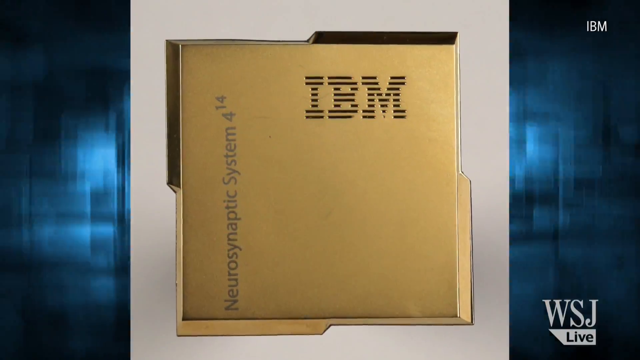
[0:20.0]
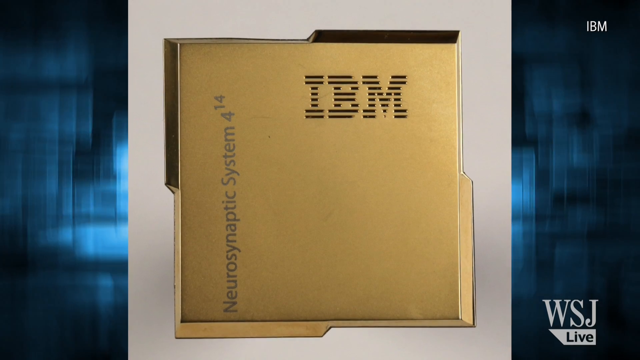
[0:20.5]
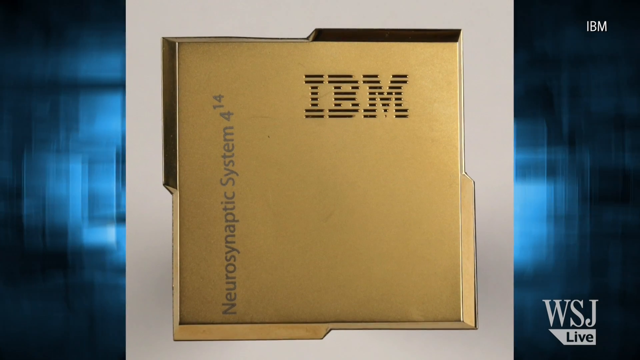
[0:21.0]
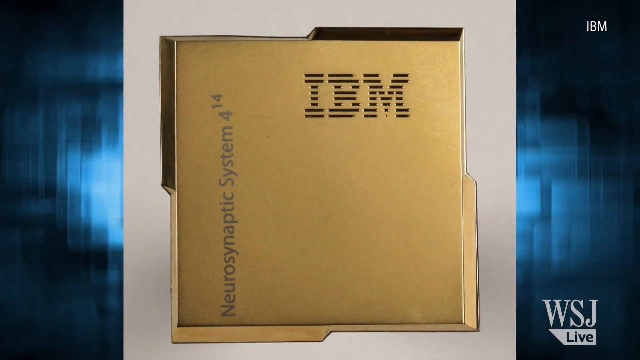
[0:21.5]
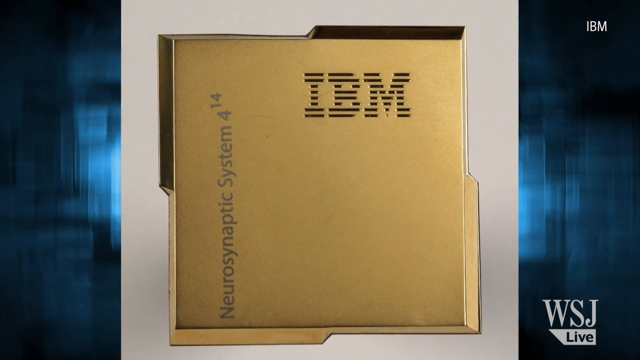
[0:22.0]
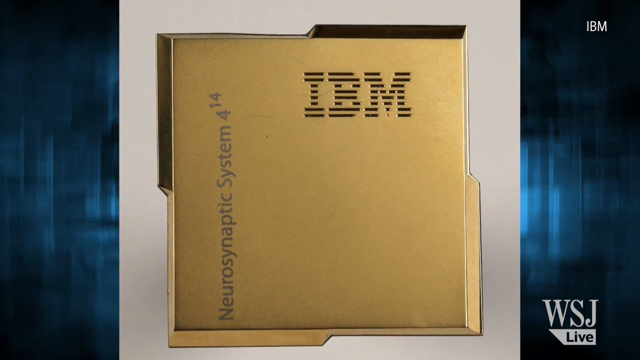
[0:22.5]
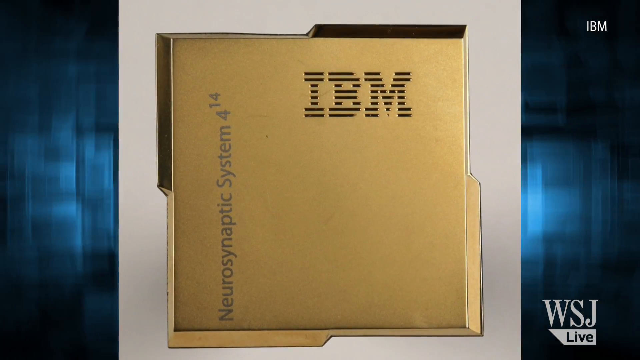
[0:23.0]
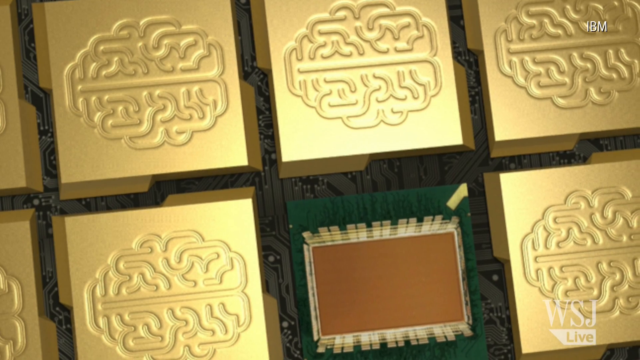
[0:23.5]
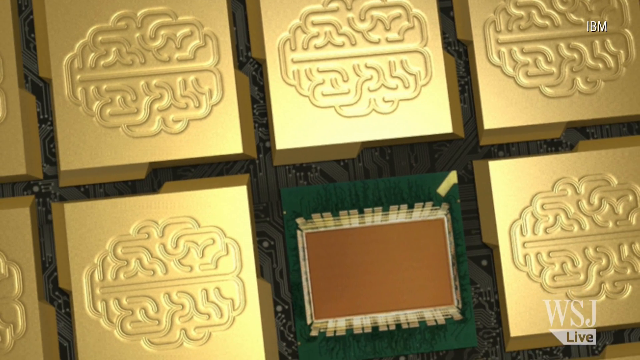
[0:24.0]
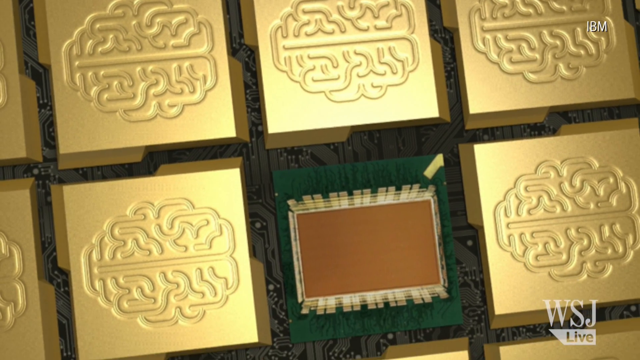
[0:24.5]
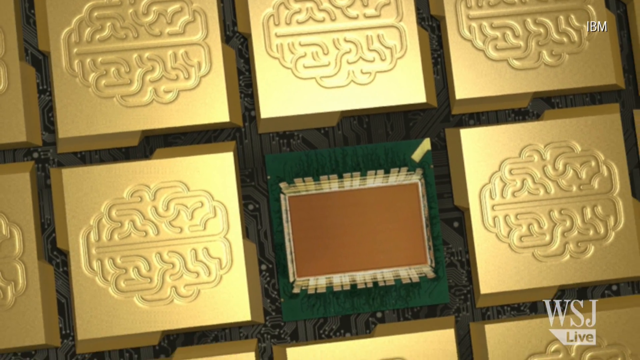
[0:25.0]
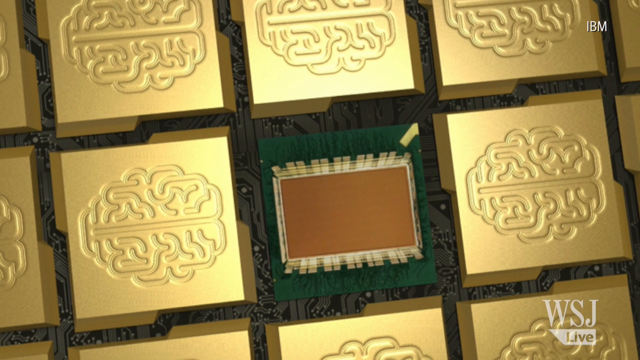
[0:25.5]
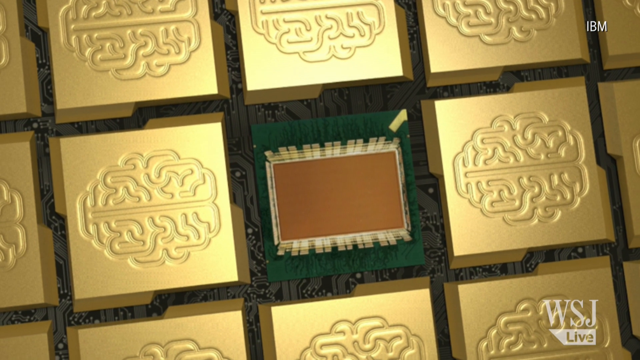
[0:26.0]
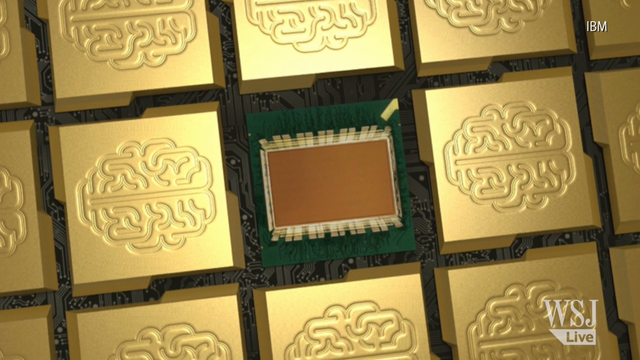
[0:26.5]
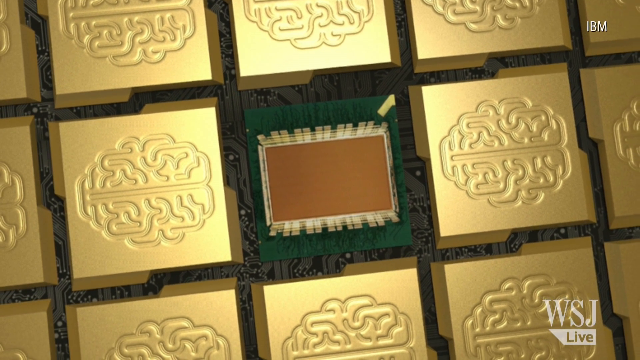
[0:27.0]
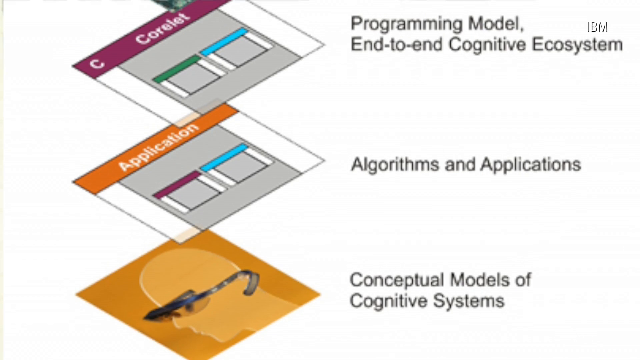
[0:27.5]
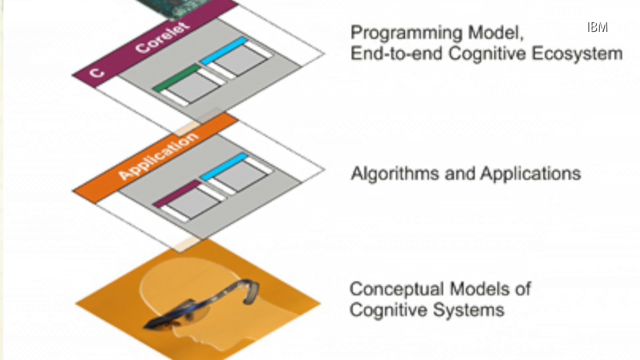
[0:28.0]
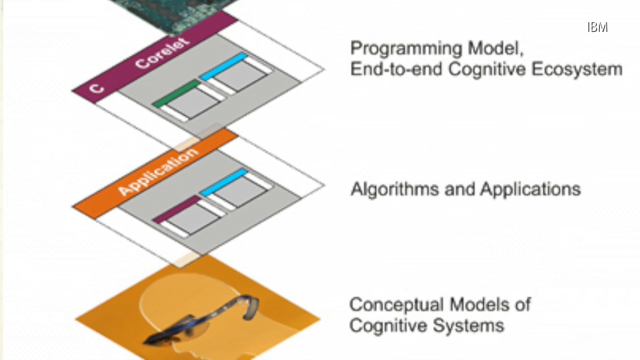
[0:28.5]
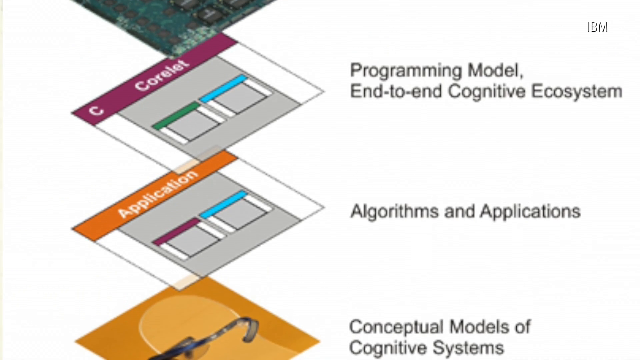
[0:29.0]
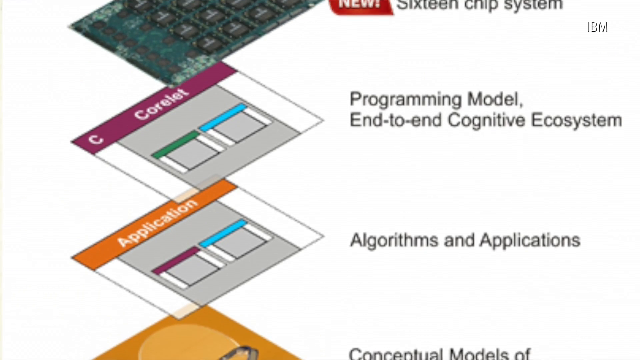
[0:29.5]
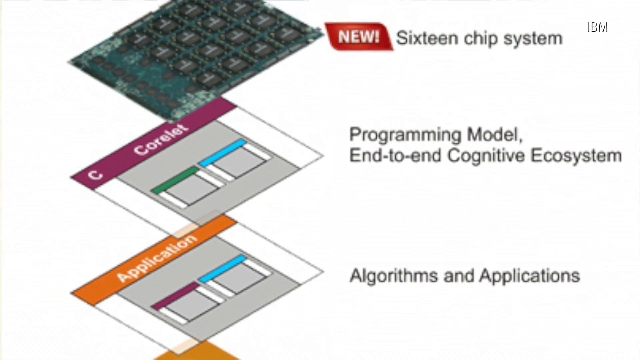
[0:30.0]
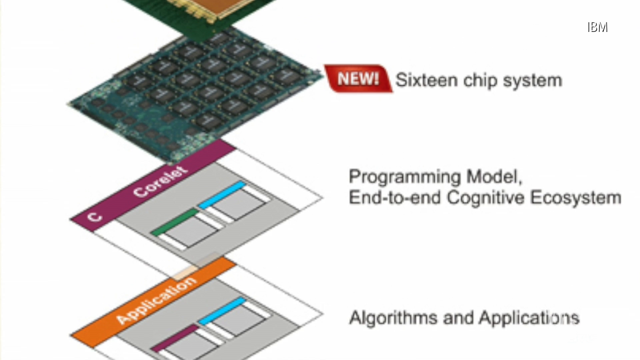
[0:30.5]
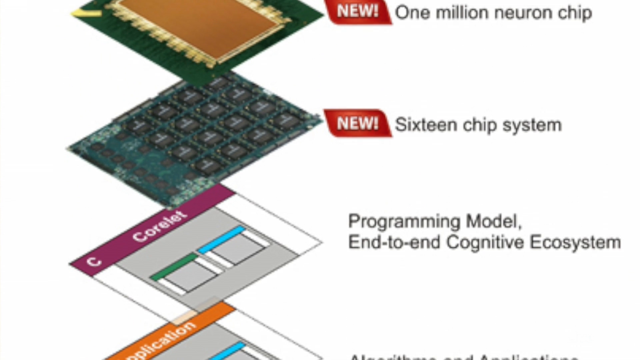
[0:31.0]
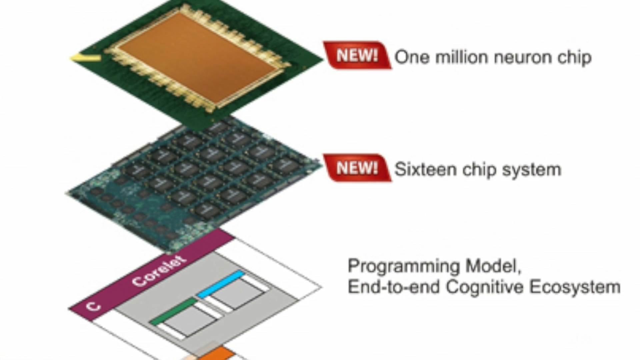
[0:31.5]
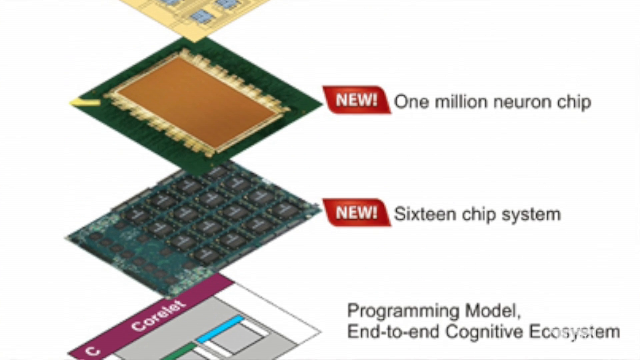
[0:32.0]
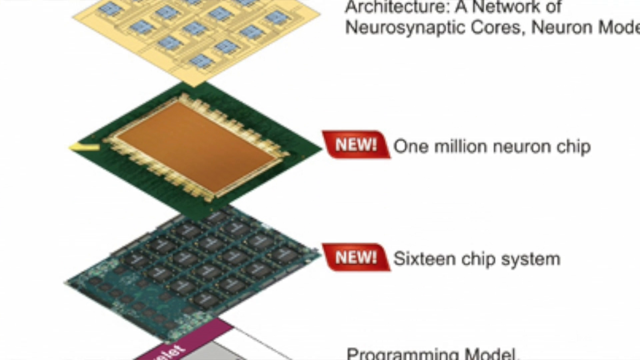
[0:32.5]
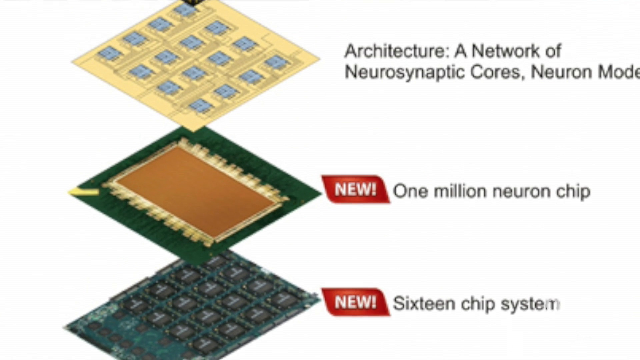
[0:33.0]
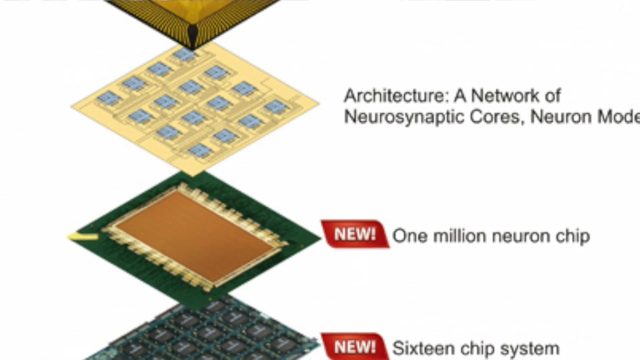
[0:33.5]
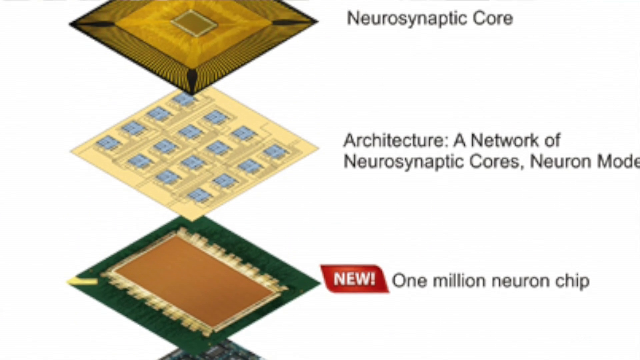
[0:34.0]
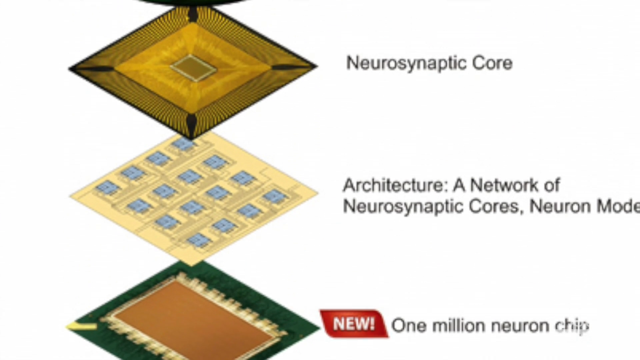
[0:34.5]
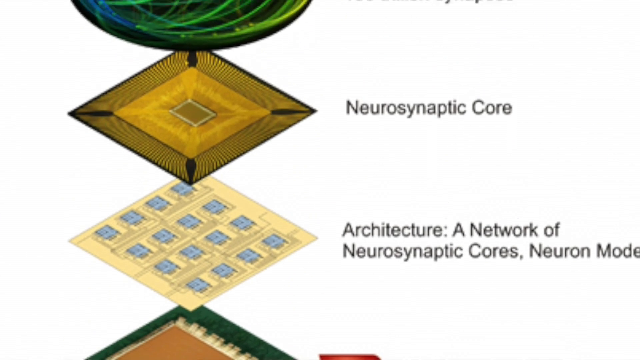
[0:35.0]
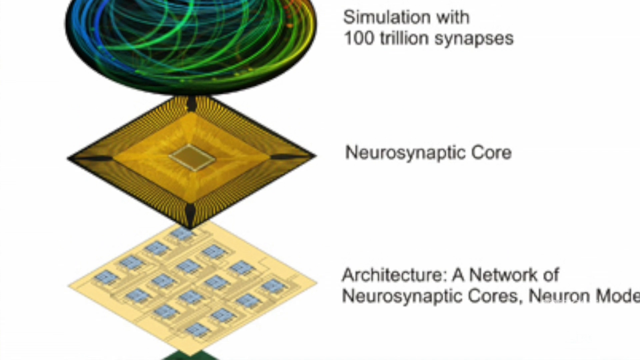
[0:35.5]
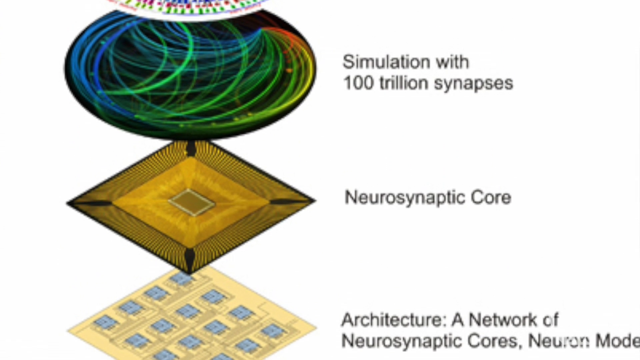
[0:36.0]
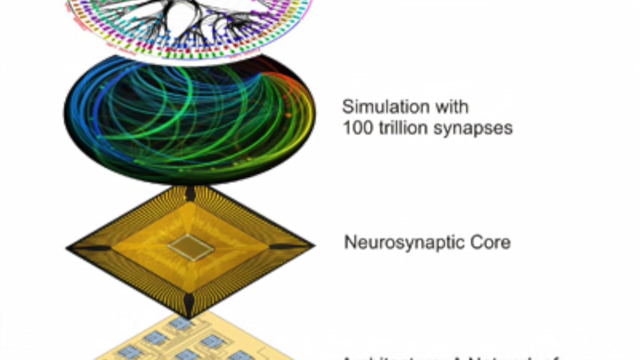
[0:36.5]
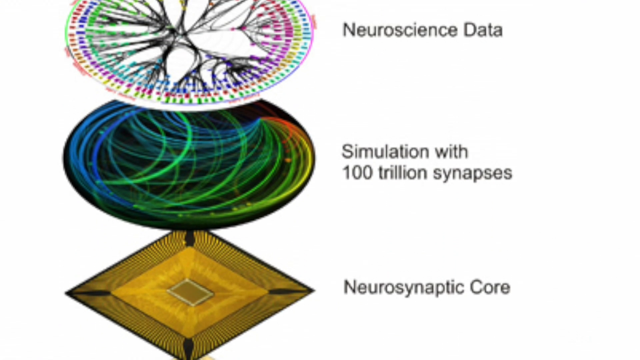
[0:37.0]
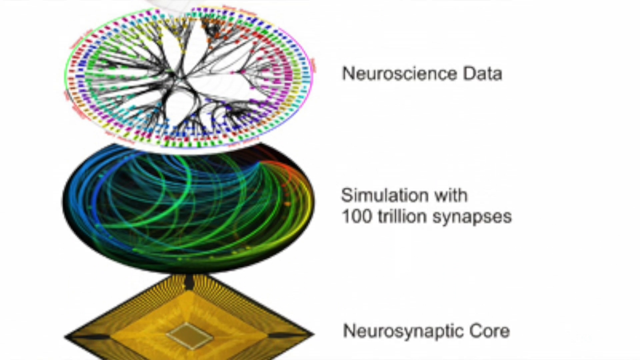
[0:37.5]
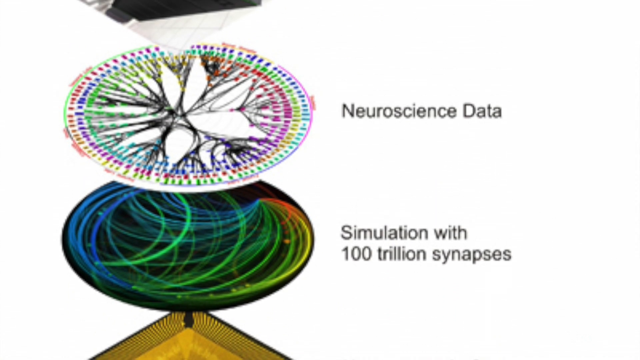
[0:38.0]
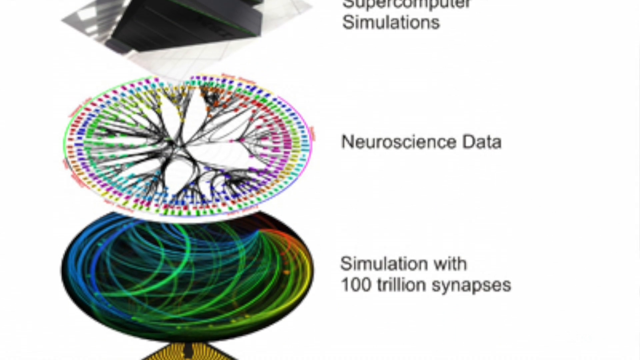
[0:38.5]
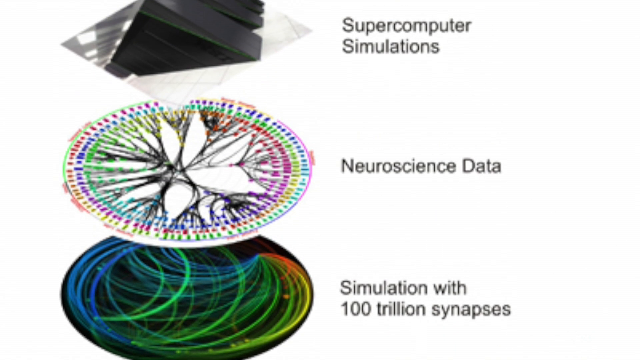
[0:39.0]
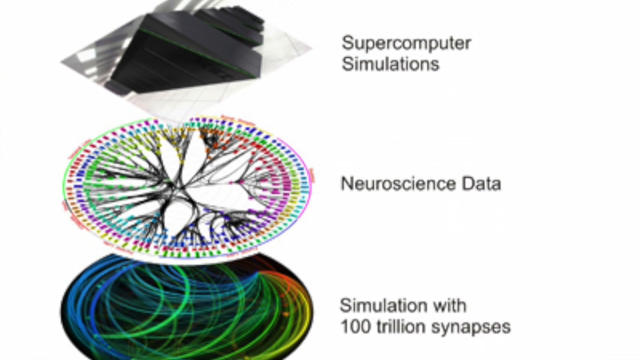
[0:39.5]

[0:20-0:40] A Neurosynaptic System, 4 to the power of 14, is shown, with many chips. Each chip looks like it has a brain logo. The chips have different names and different colours and are not made the same, though on the outside they look the same. They appear to be technical chips, with labels apparently referring to things like 1 million neural chips, the neurosynaptic core, simulation, neuroscience data, programming, architecture and supercomputer simulations. More than 10 chips are shown; some have names written, such as "16 chip systems", while others have no names. Some are shown in floral patterns, some in spirals, some as technical systems, some with applications, and some marked as new.